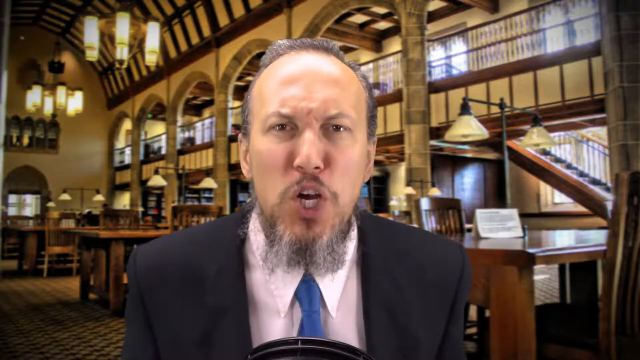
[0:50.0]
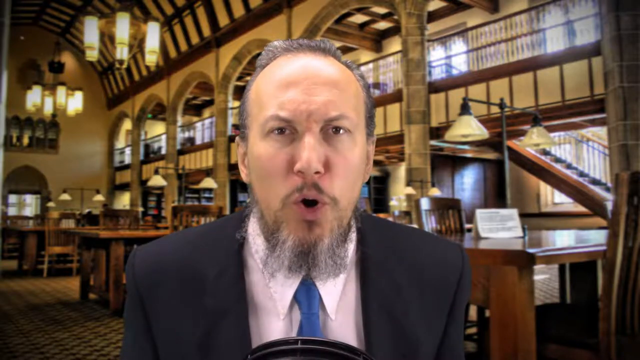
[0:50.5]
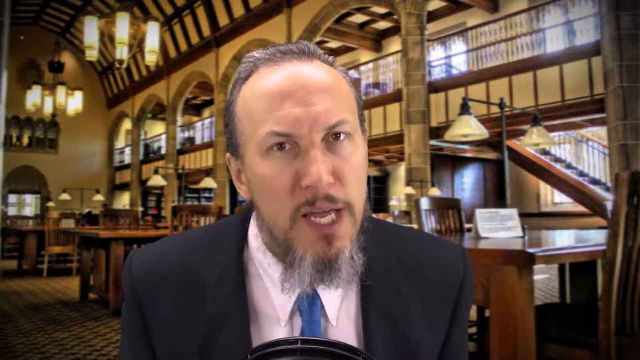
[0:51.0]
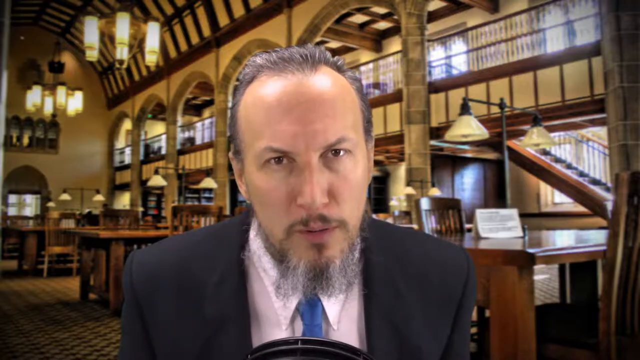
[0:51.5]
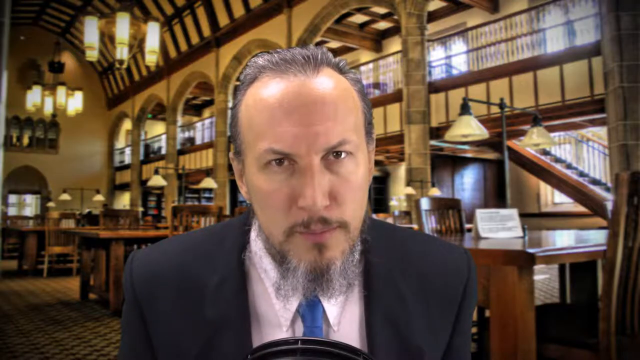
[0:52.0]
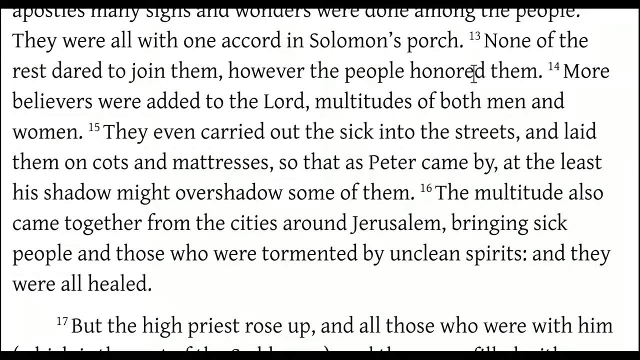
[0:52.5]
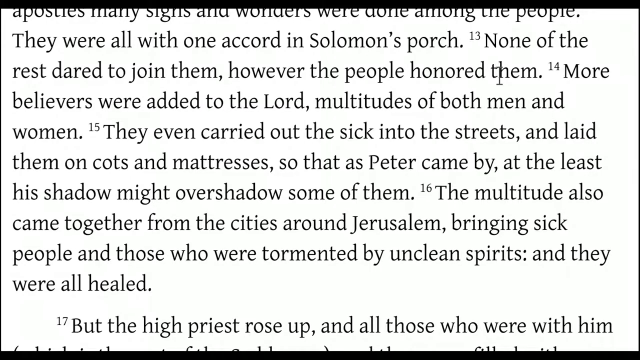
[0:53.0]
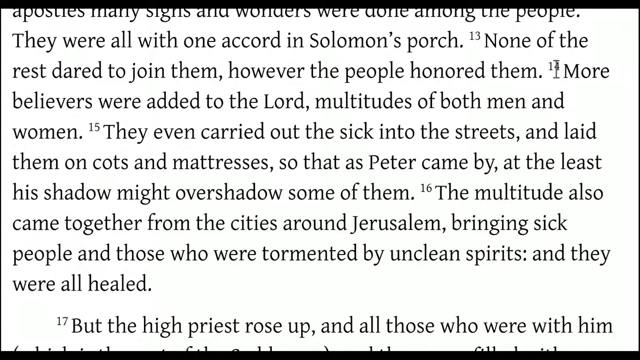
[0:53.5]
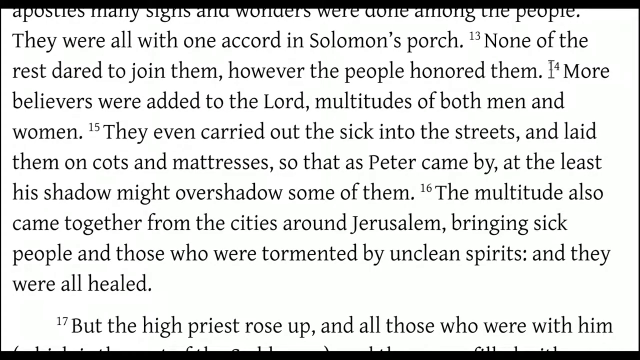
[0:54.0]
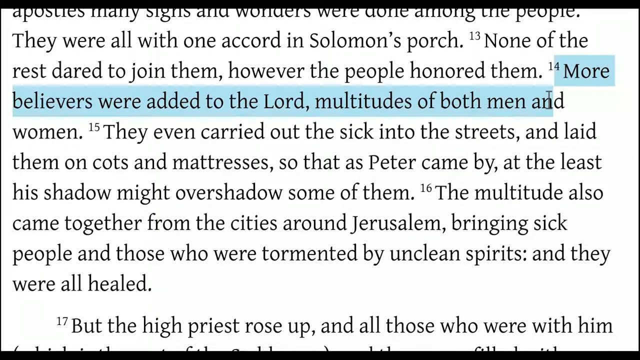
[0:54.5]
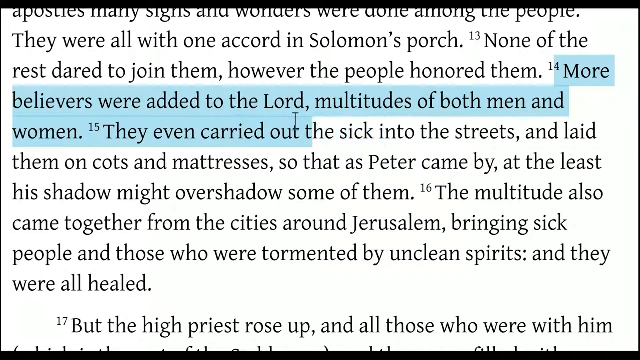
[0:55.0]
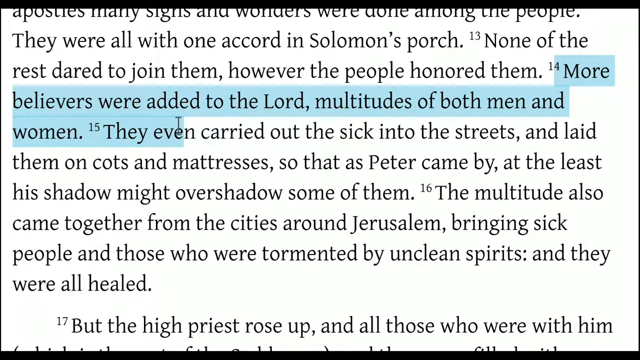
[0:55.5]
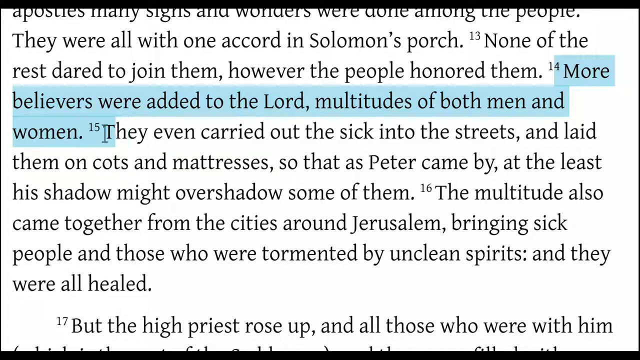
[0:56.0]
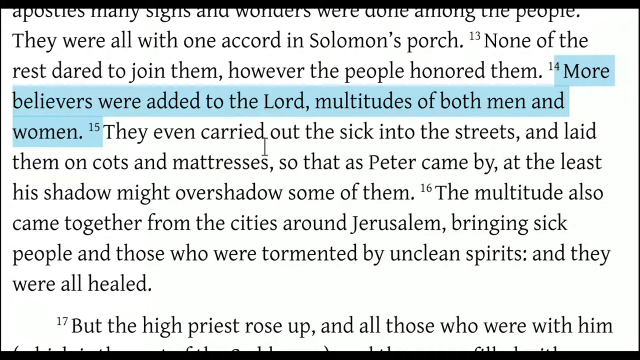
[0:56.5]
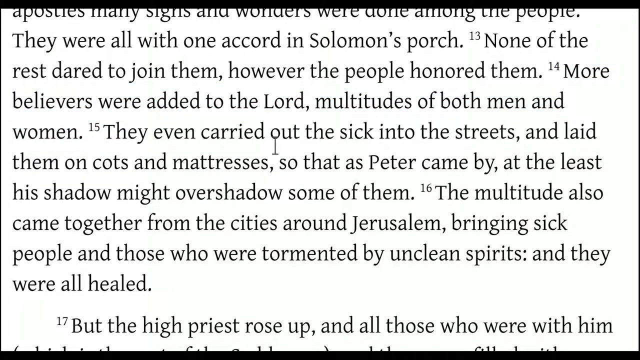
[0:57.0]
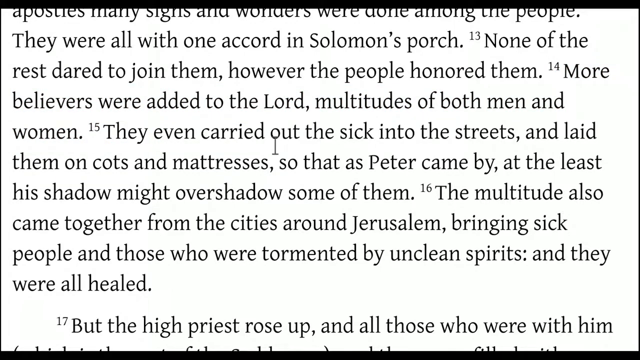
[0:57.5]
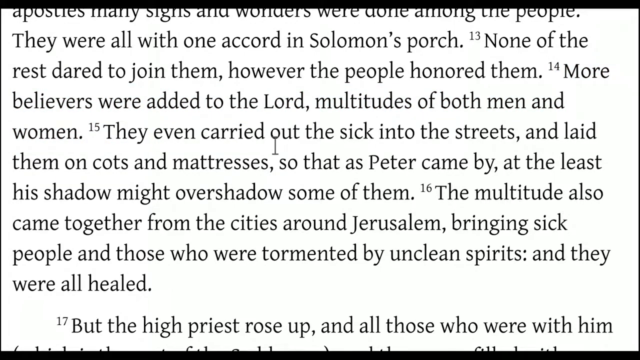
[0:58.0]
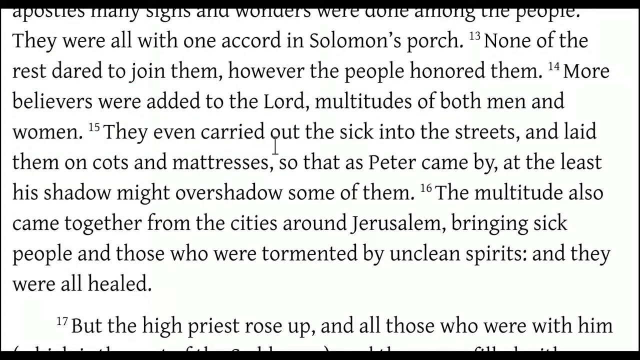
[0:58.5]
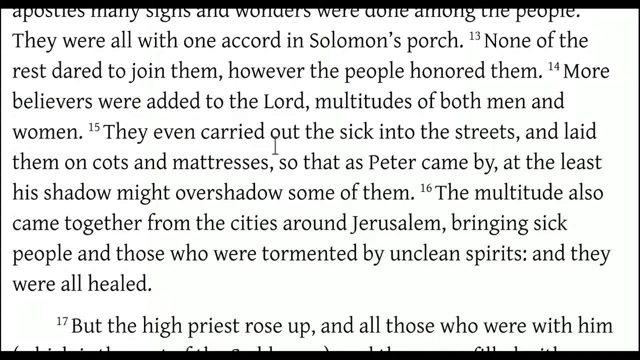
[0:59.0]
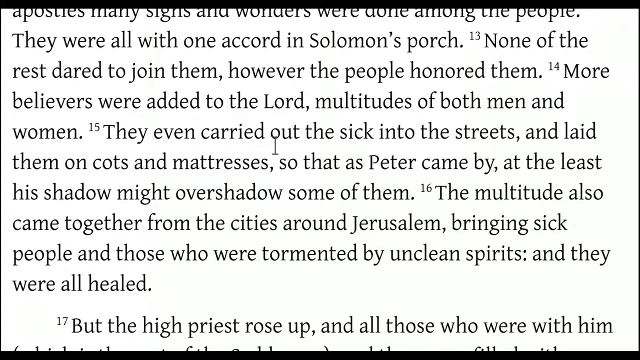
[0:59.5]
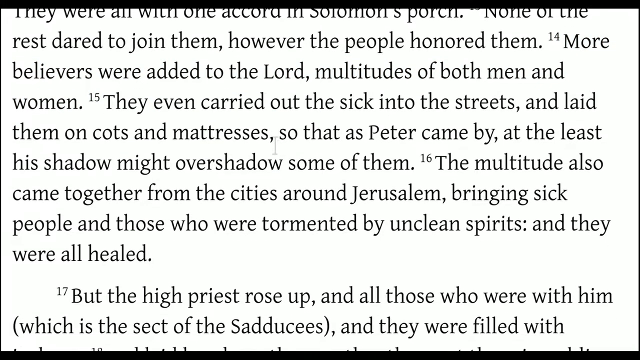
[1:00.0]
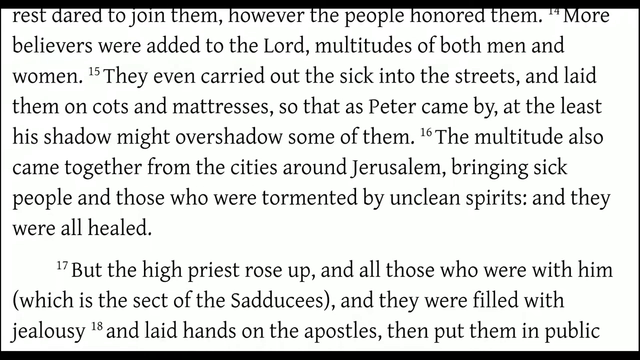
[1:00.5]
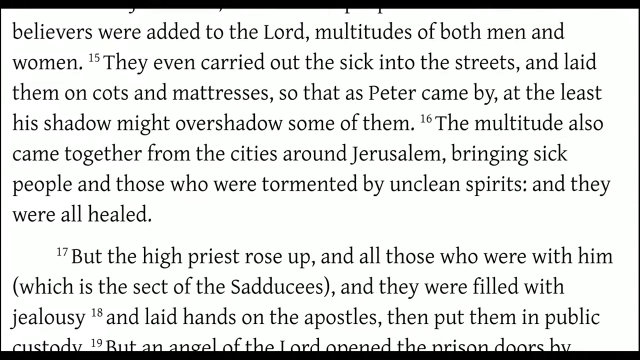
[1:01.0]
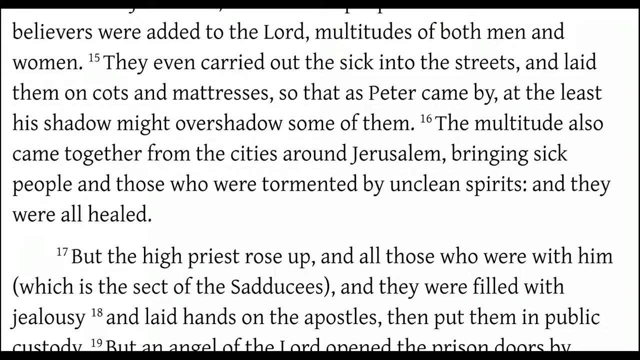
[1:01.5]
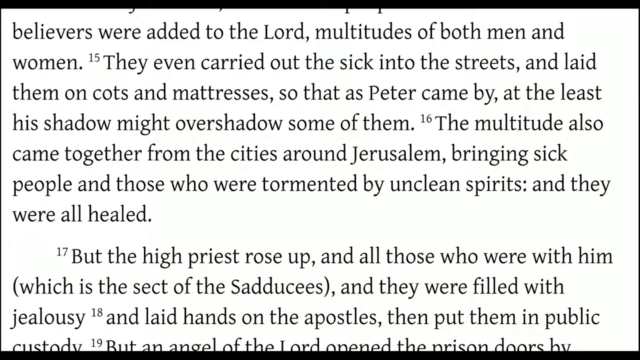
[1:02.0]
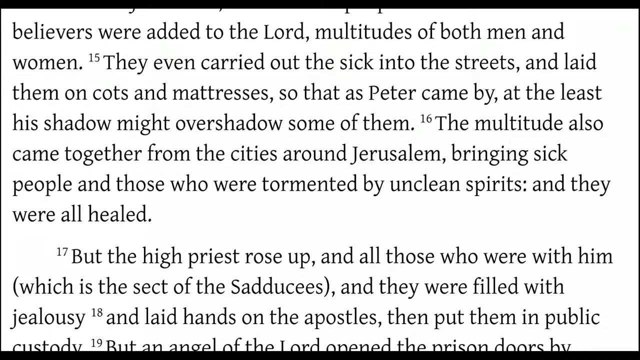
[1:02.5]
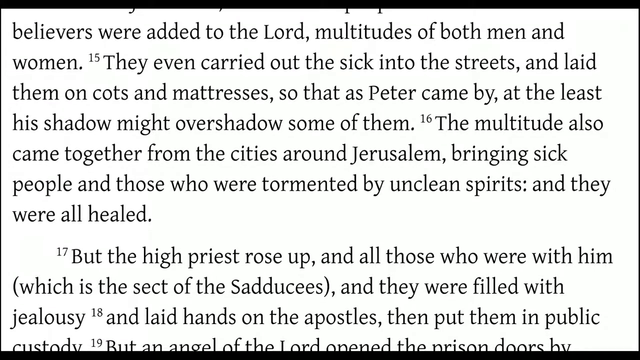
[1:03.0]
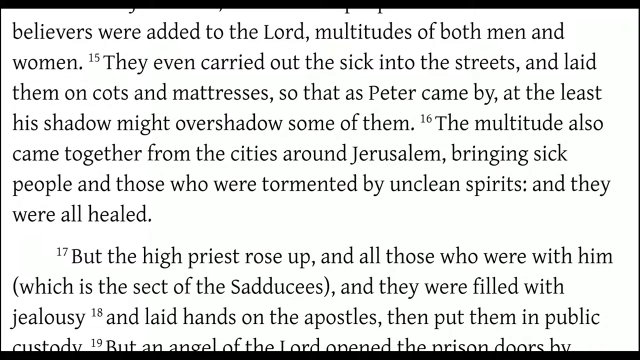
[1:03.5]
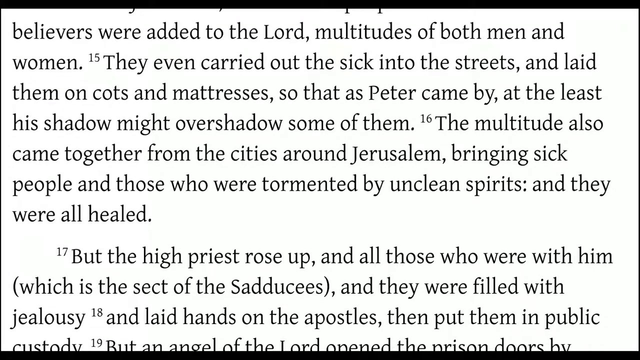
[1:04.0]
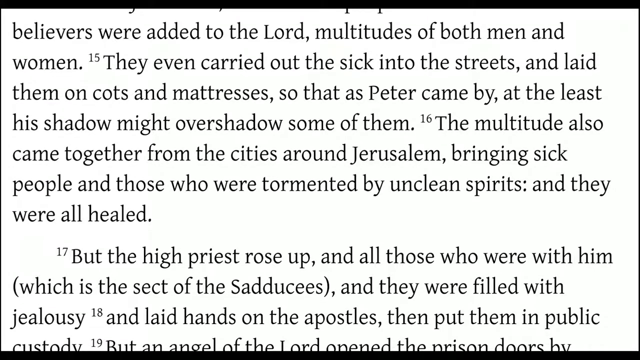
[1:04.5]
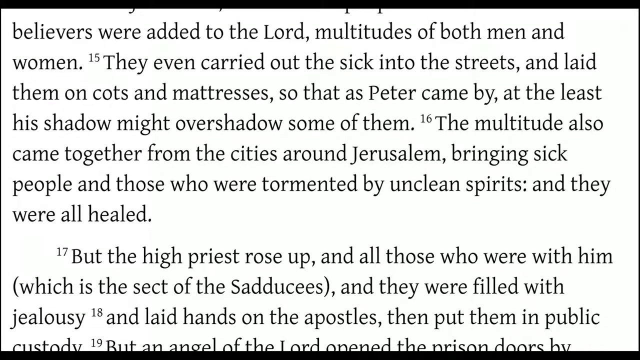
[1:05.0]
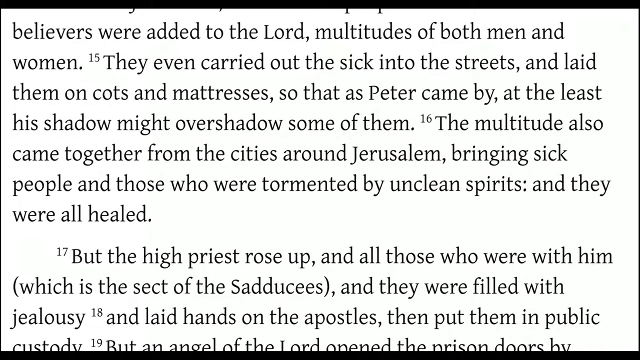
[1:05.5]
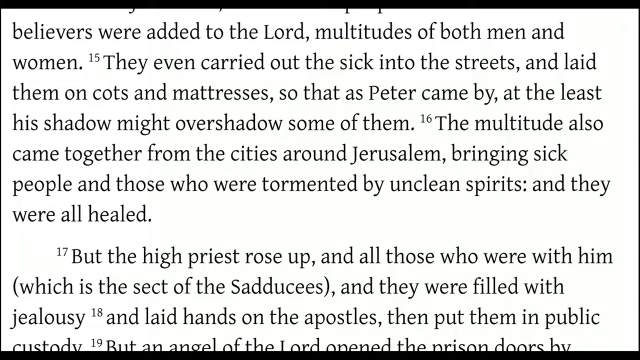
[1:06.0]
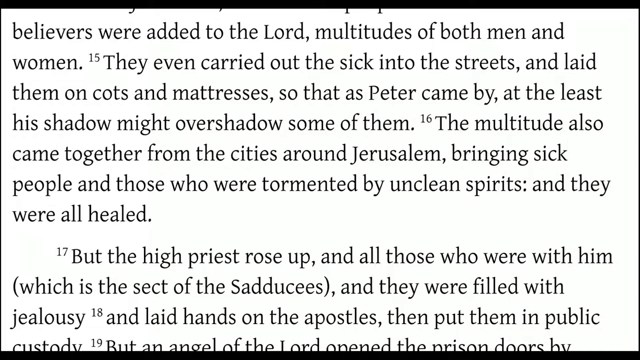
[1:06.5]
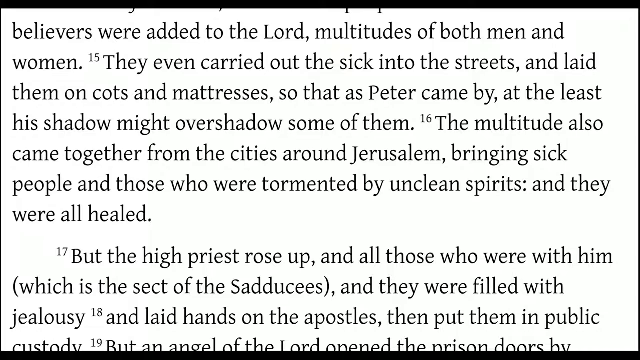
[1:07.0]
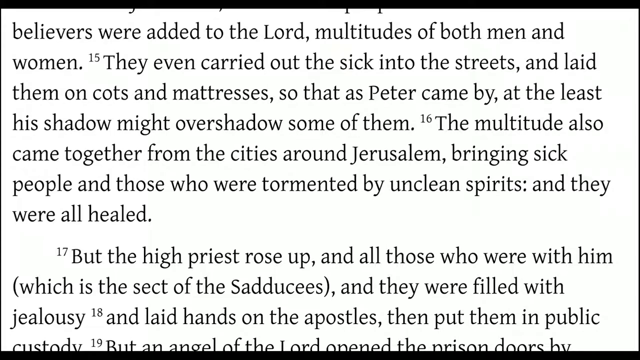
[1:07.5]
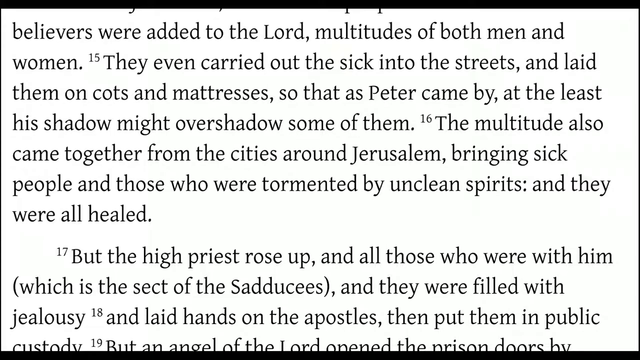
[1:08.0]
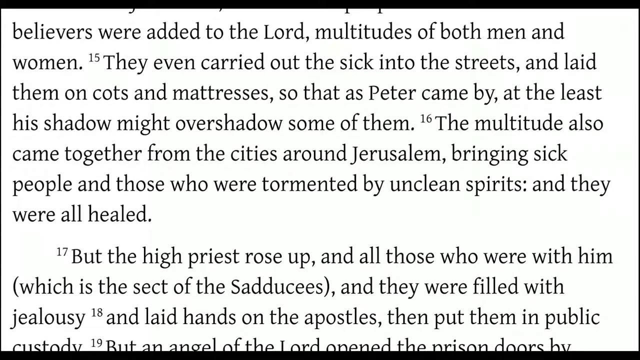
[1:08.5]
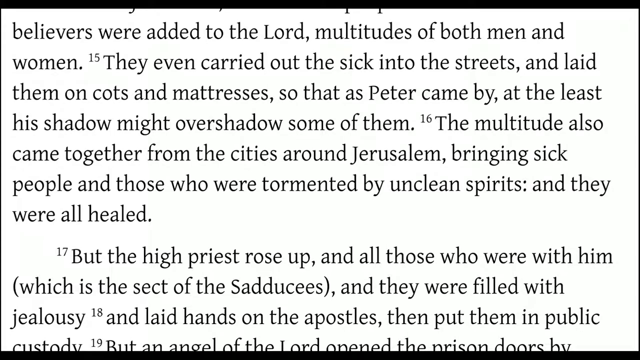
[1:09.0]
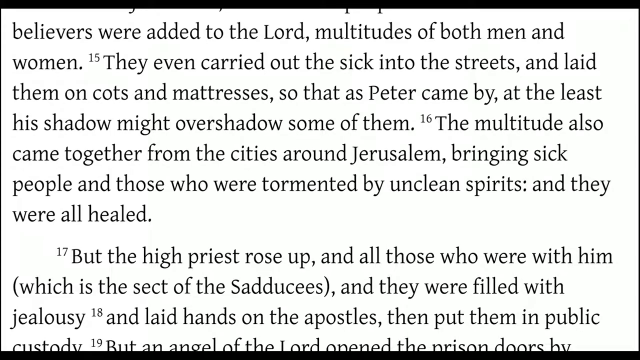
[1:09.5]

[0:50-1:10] A man of approximately late 40s, possibly early 50s, with smooth Caucasian skin, is seen from the shoulders up as he speaks to the camera. Behind him is the grand two-story library he is seated in, somewhat retro in style, with cathedral-like openings on the second floor and a balcony. Lantern-style lights hang from the ceiling in groups, and rectangular tables of dark, shiny wood are throughout the library. His facial expression looks quite intense, his mouth shaped like an O, and he talks to the camera with passion. The scene then changes to a close-up of text within a religious-type book, with a mouse cursor hovering over it. Footnote 16 reads, "The multitude also came together from the cities around Jerusalem bringing sick people and those who were tormented by unclean spirits and they were all healed." The mouse moves back and forth, highlighting certain phrases somewhat haphazardly, and then the page scrolls downward. Footnote 17 appears in a new paragraph that reads, "but the high priest rose up and all those who were with him (which is the sect of the Sadducees). they were filled with jealousy."